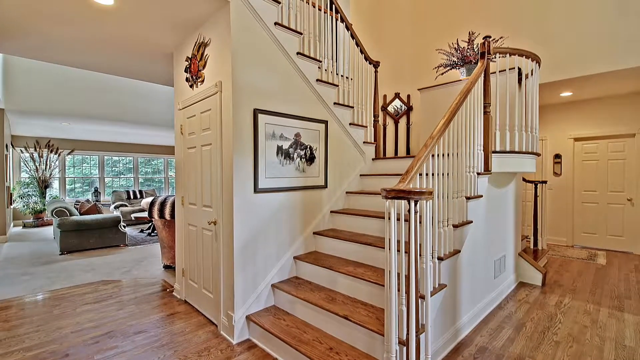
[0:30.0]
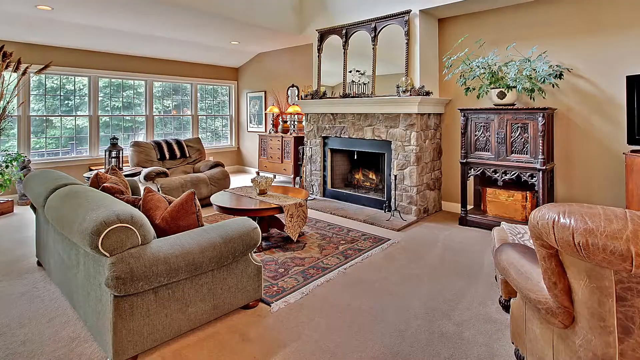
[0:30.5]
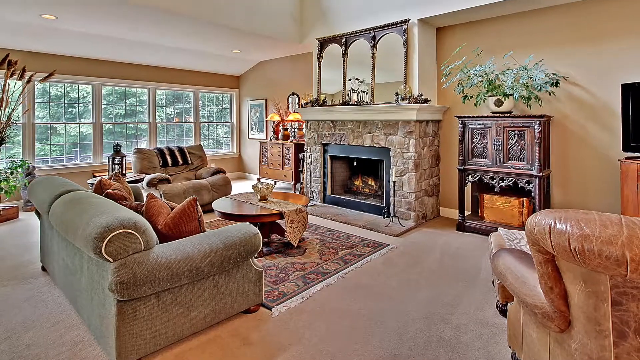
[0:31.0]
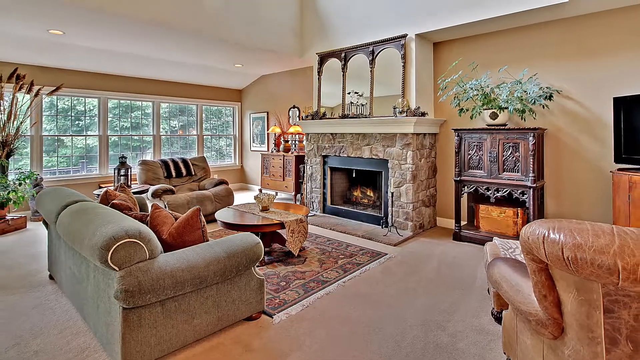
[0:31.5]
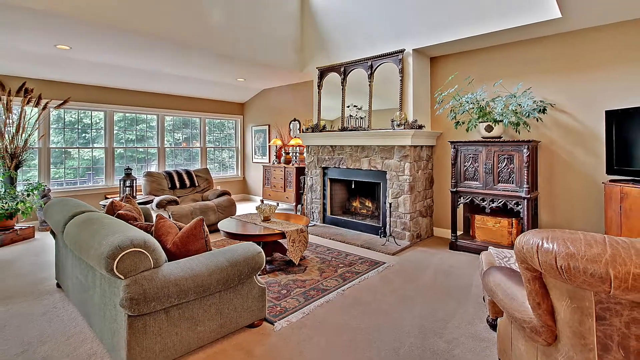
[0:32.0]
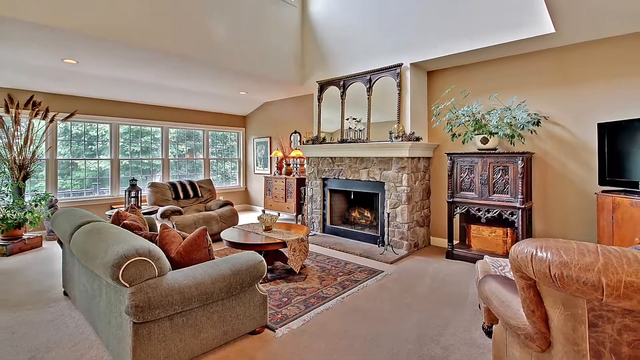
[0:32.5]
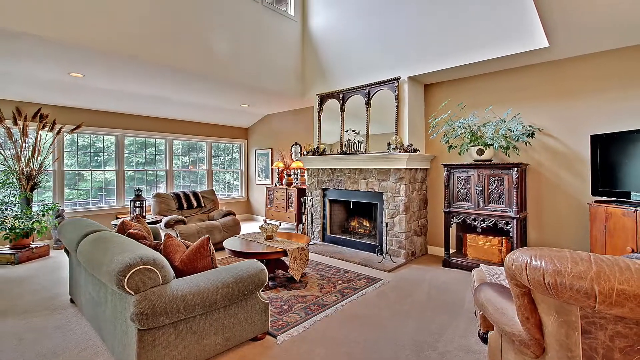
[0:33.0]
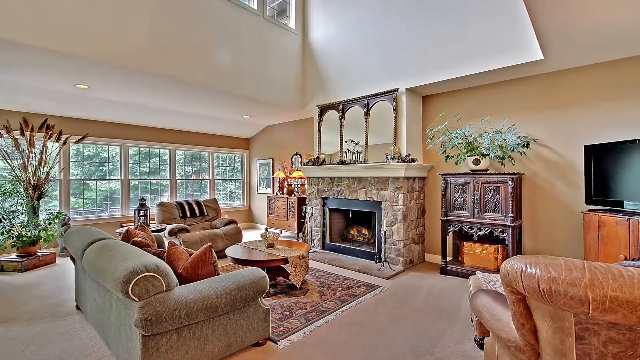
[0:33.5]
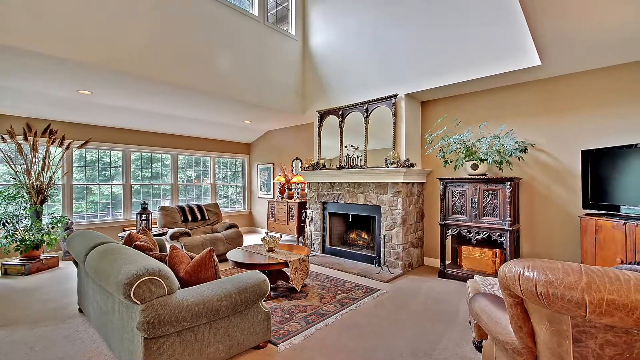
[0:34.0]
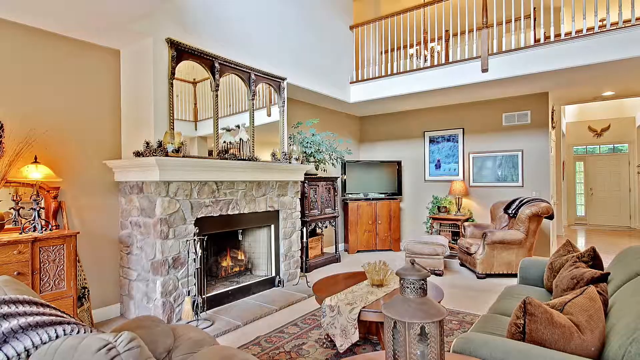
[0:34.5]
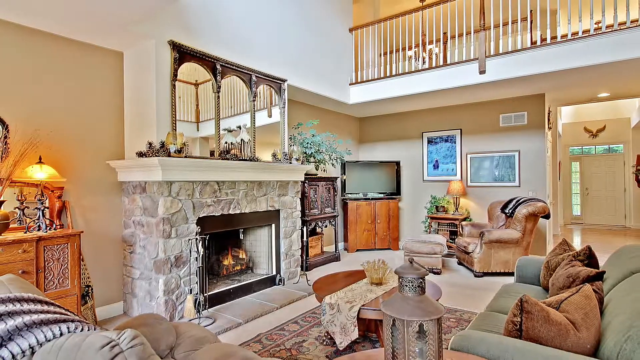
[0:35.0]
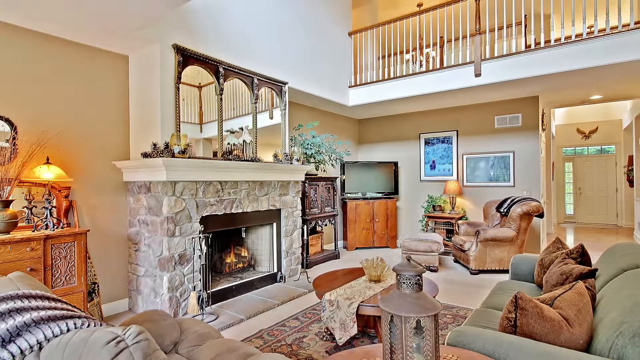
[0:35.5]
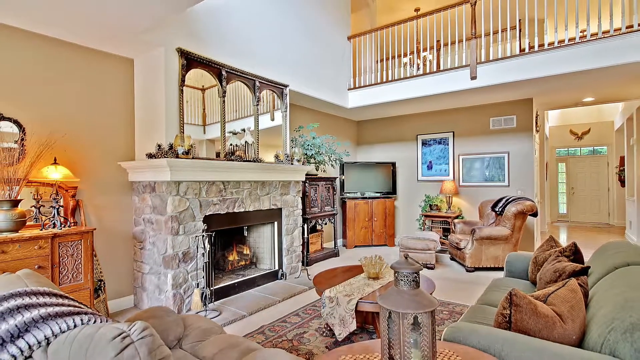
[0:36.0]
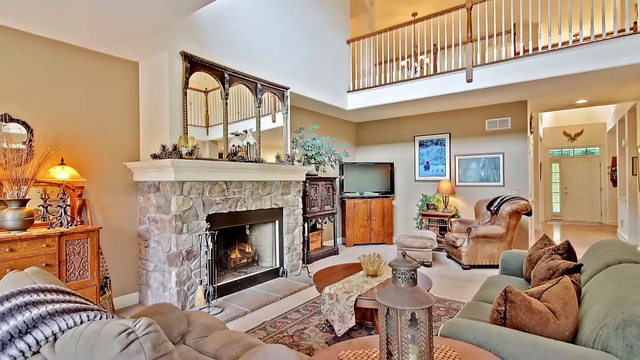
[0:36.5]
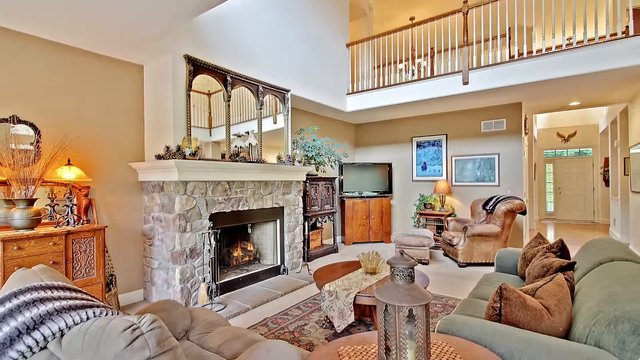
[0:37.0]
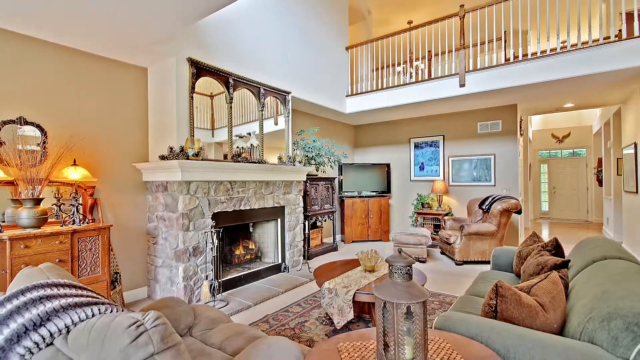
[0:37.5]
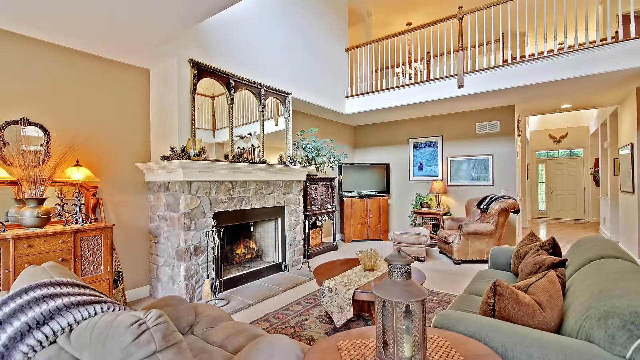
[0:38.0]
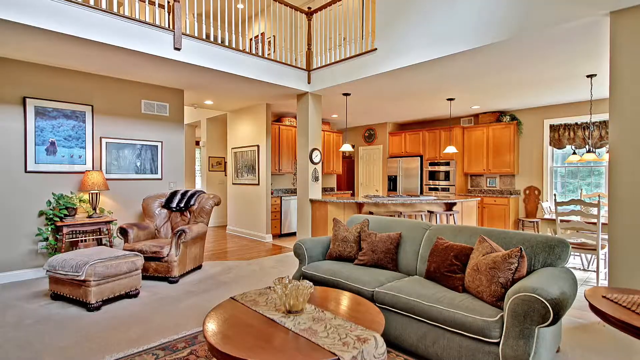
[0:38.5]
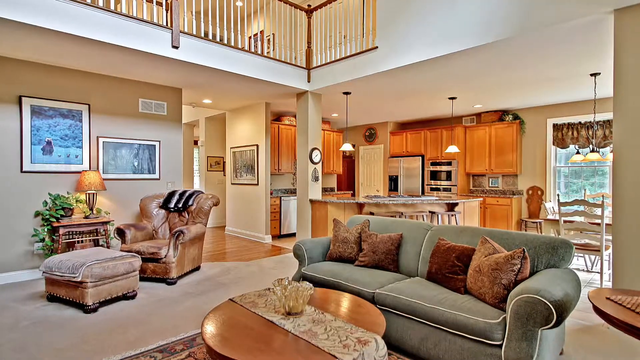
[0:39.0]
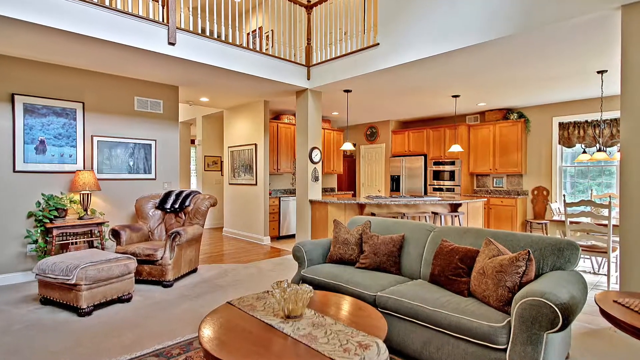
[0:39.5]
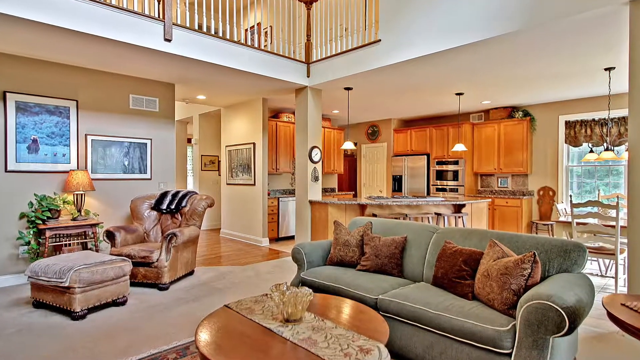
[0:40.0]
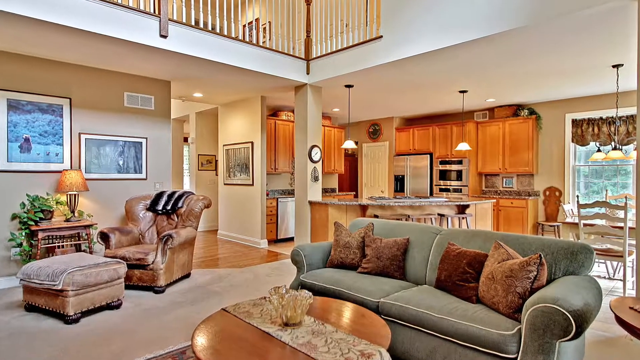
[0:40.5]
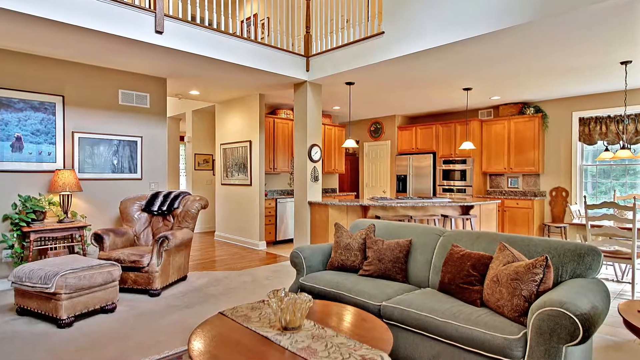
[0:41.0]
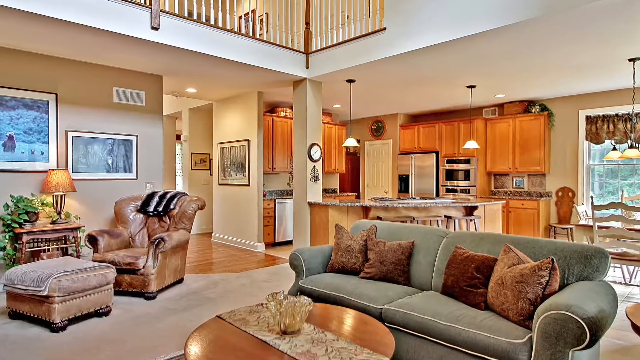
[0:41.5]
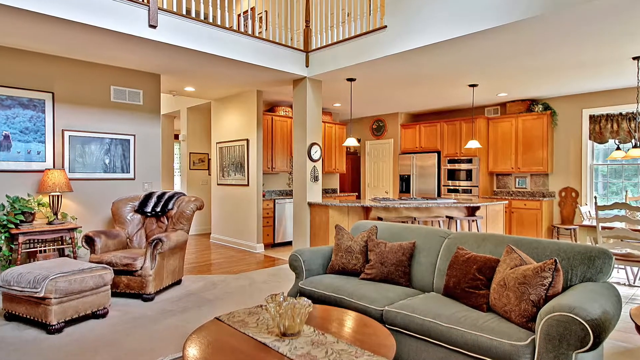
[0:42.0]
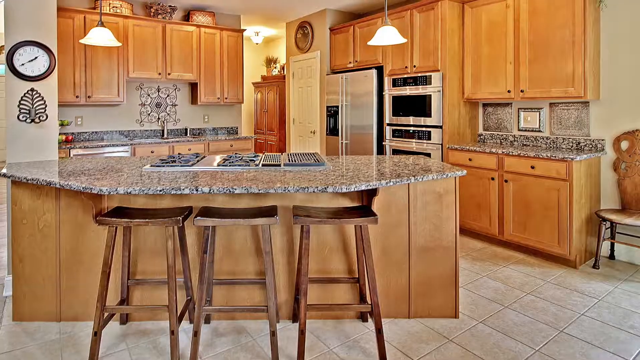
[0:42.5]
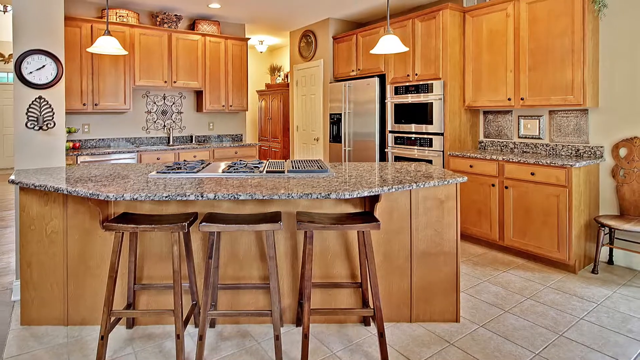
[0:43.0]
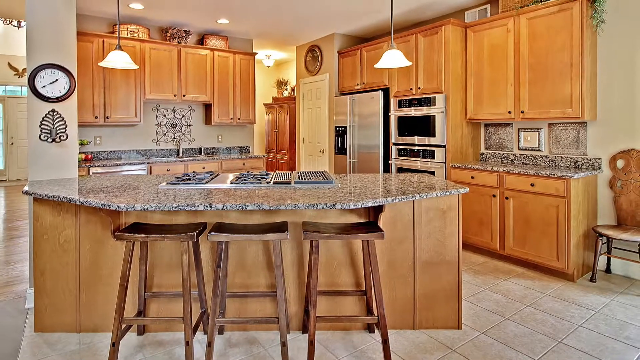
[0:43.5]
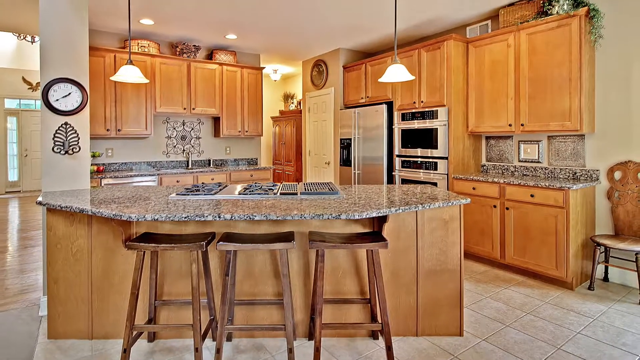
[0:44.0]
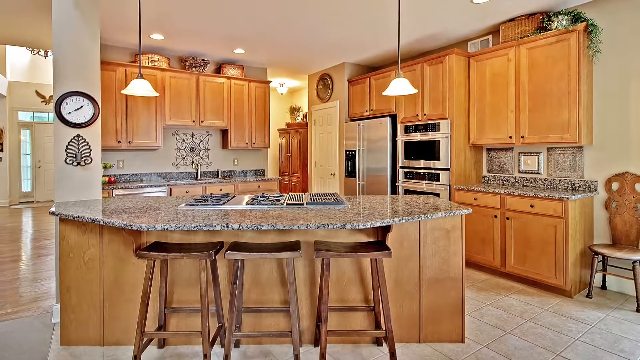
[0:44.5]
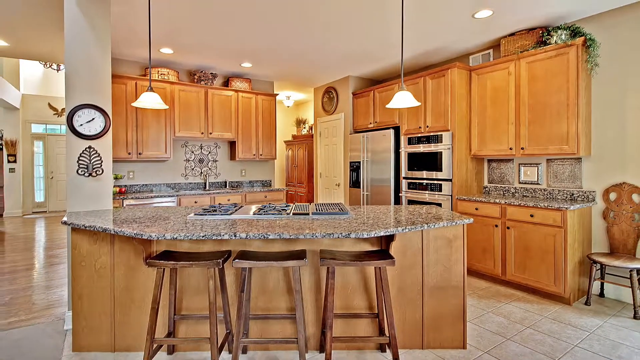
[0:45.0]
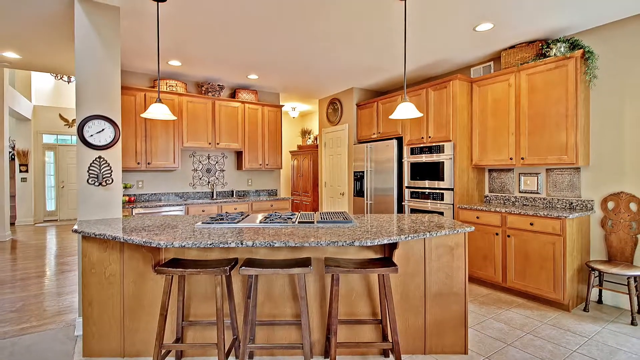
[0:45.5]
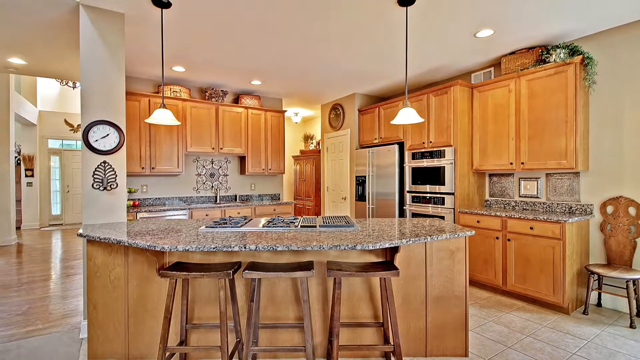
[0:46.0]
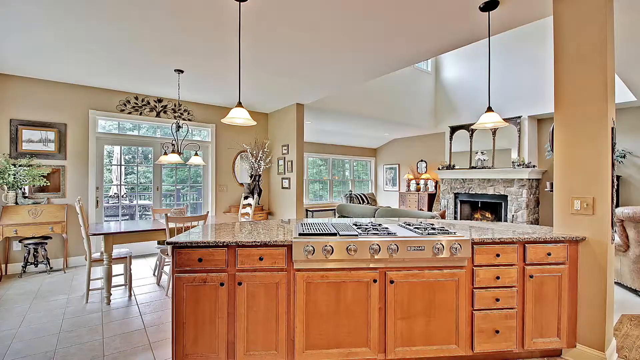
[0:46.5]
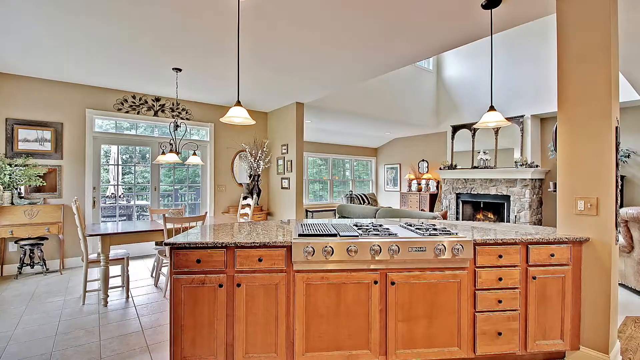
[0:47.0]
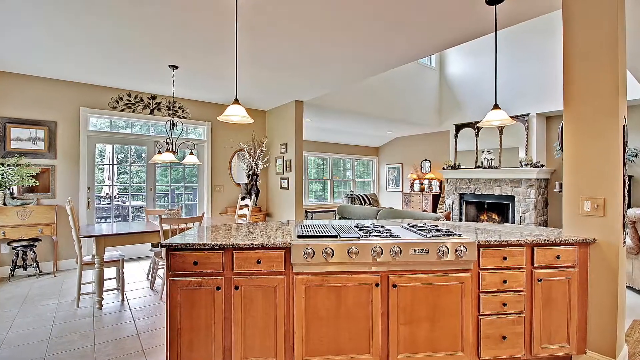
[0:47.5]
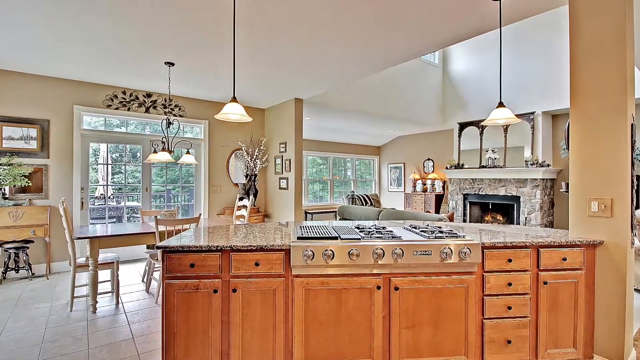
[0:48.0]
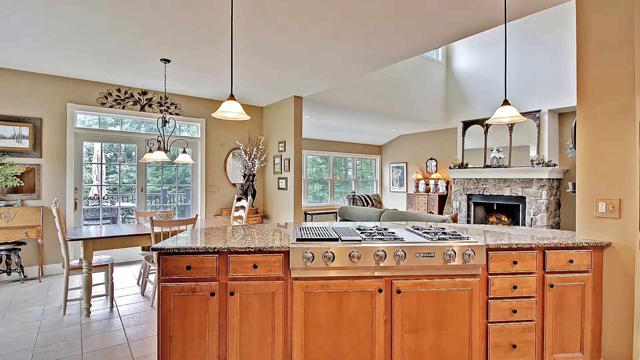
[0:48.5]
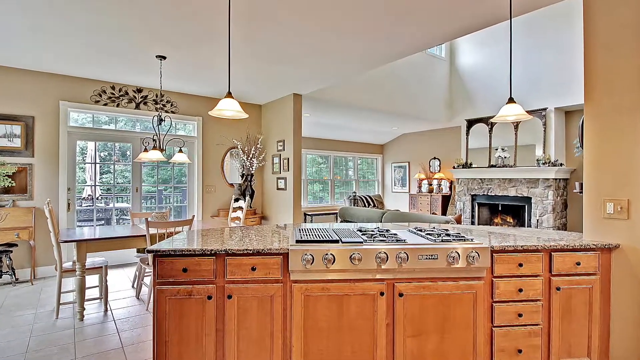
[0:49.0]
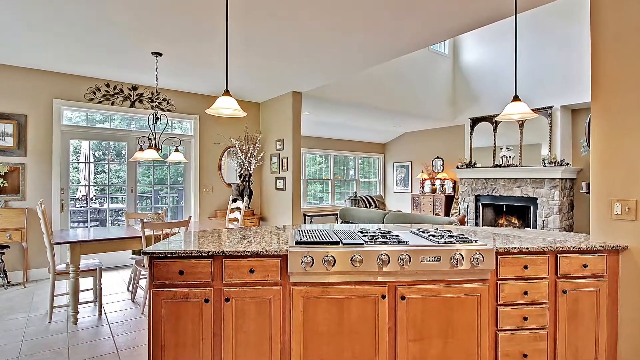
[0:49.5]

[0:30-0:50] Inside the house, the steps are white and brown, and the brown handrails follow an almost circular, 90-degree stairway, with lots of brown trim. The big house has a living room with lots of windows, white trim, a tan-brown ceiling and a lighted wood floor. Kind of to the right, there is a fireplace going with a yellow glow. The living room has couches, gray and white, one of them patterned, along with rugs, possibly a TV to the right, and an old-fashioned-looking cabinet to the right of the fireplace with plants on top. There is a round table, a coffee table in between, a green couch and pillows. The kitchen has a whole lot of brown on the cabinets and an island stove area. The upstairs ceiling is white, and no ceiling fan is visible. There are old-fashioned lights and a clock on a pillar. Overall there is a lot of brown, a lot of lighting, a lot of white, and a lot of wood with brown grain. There is a closet door that probably leads down to a basement.